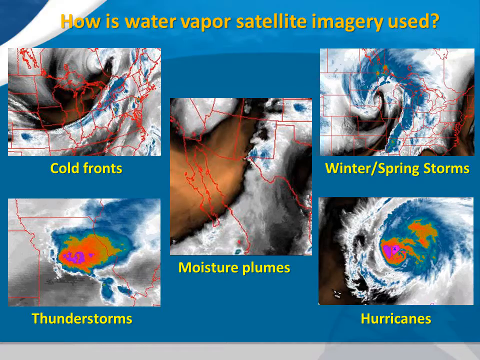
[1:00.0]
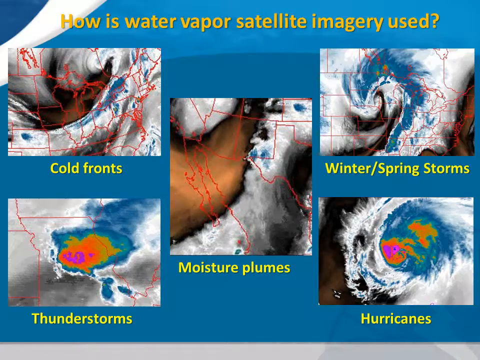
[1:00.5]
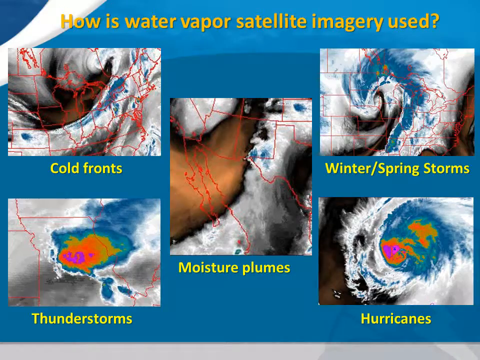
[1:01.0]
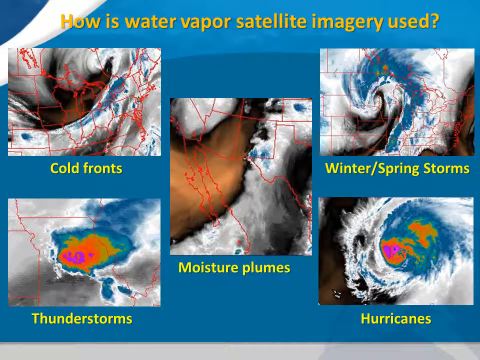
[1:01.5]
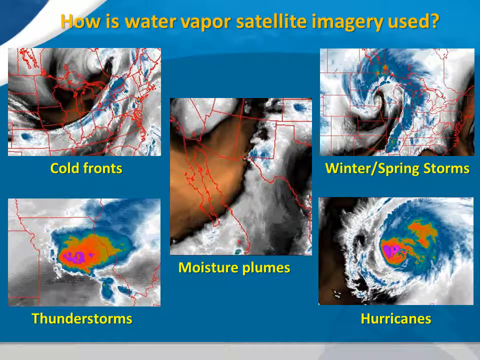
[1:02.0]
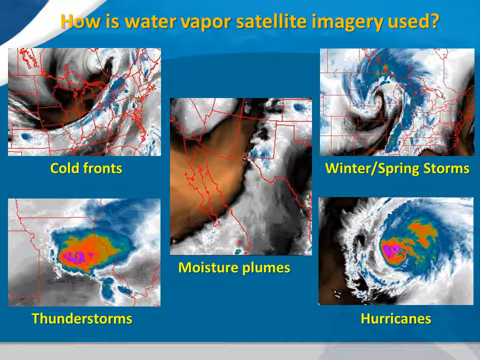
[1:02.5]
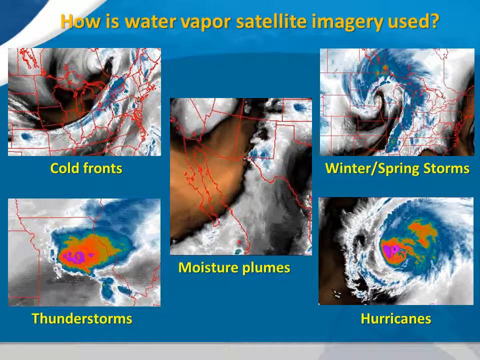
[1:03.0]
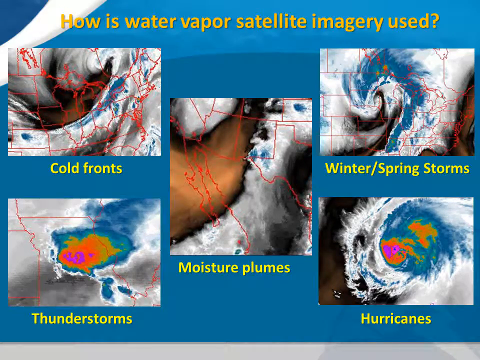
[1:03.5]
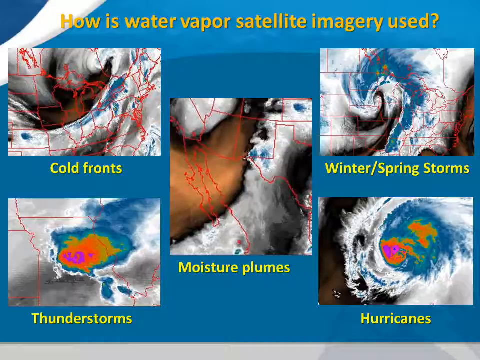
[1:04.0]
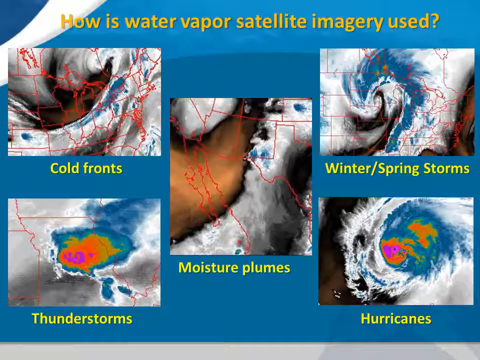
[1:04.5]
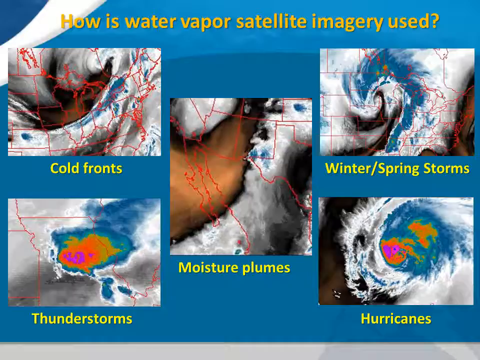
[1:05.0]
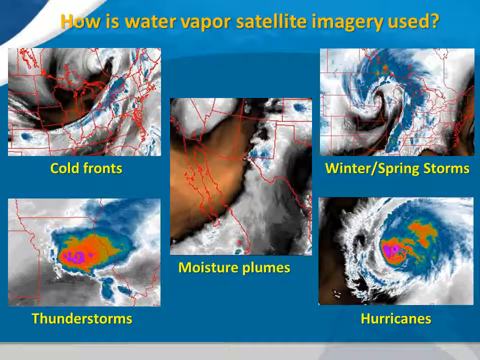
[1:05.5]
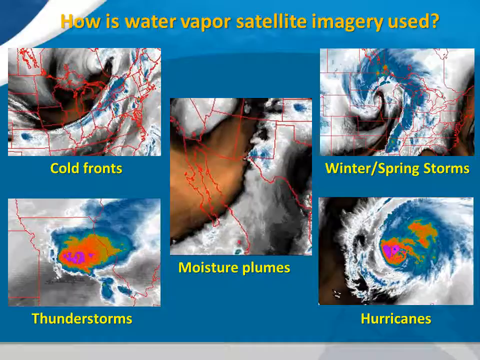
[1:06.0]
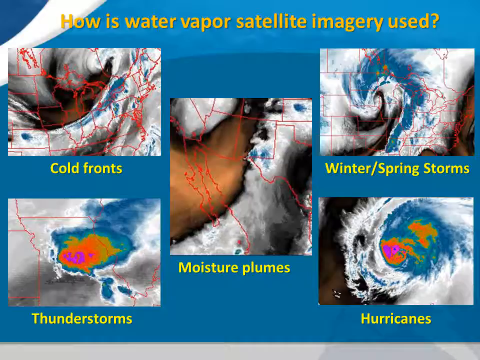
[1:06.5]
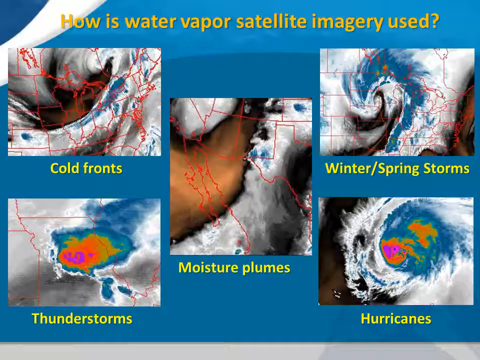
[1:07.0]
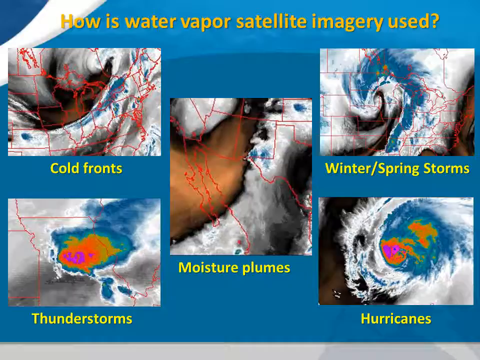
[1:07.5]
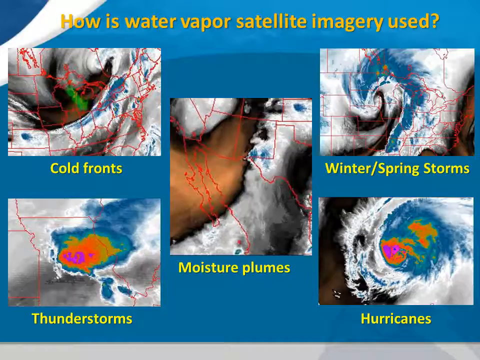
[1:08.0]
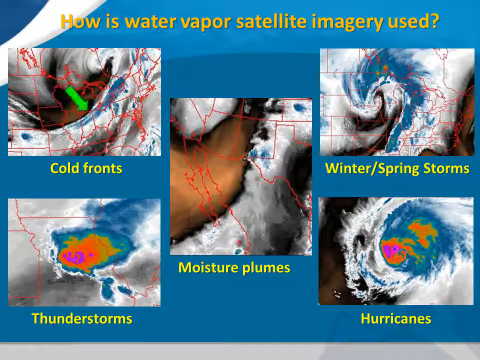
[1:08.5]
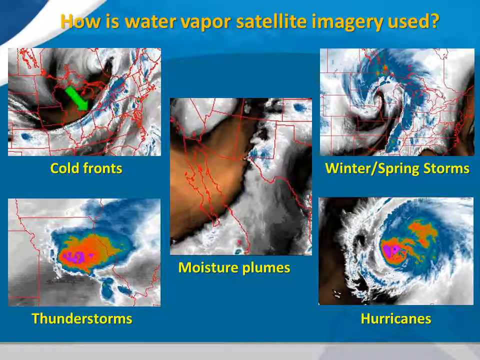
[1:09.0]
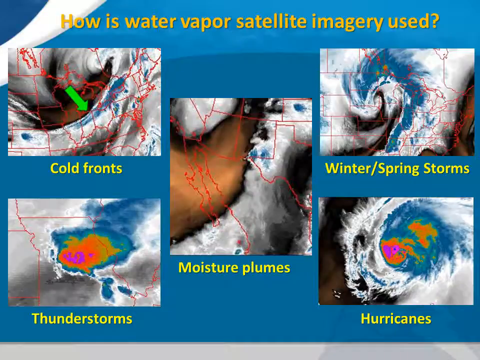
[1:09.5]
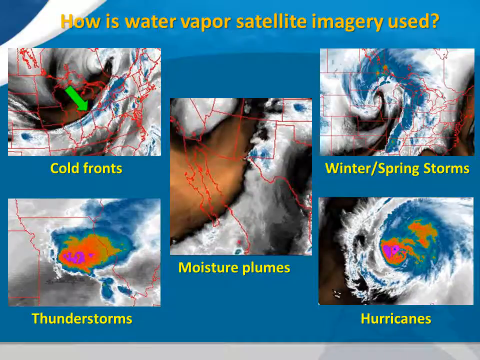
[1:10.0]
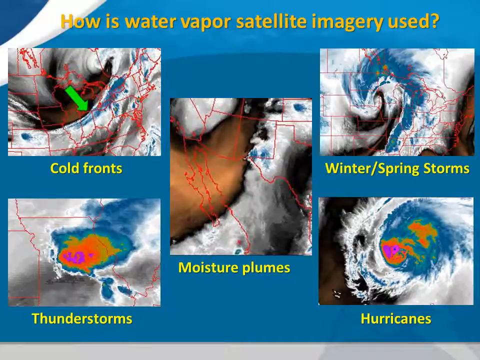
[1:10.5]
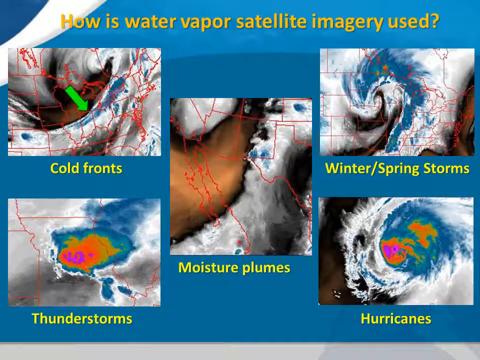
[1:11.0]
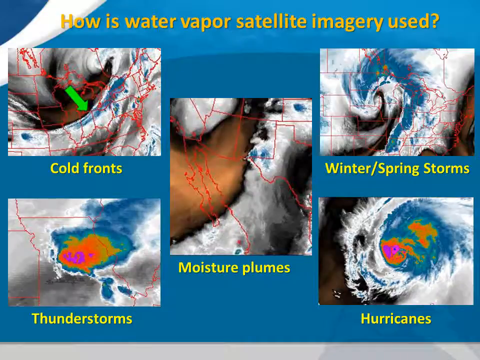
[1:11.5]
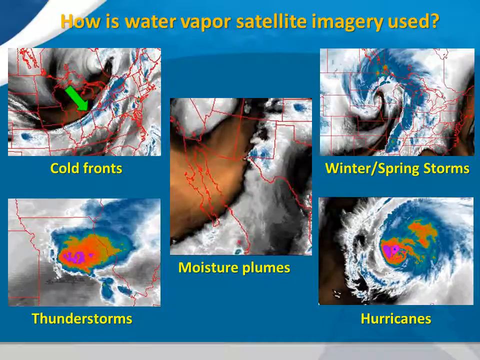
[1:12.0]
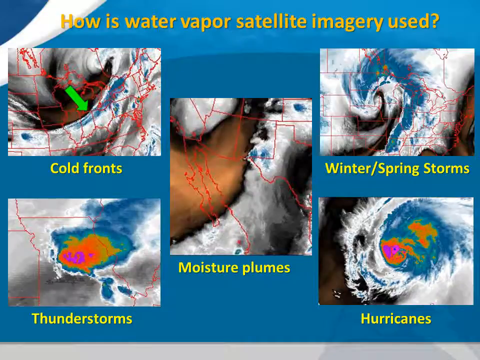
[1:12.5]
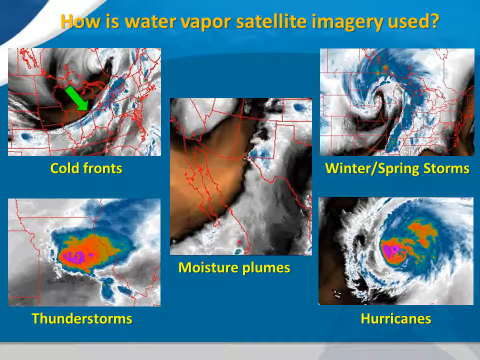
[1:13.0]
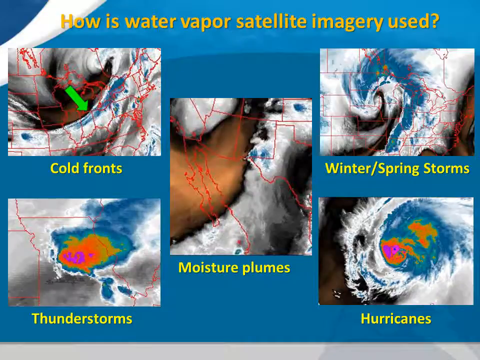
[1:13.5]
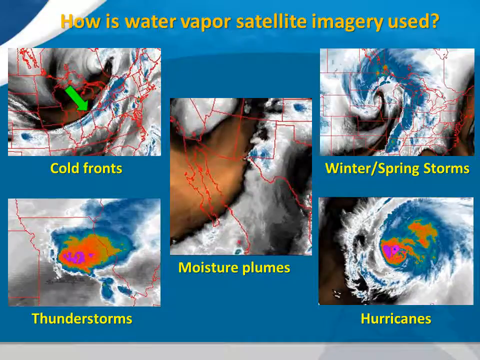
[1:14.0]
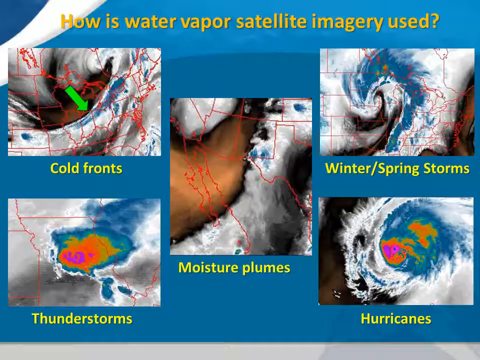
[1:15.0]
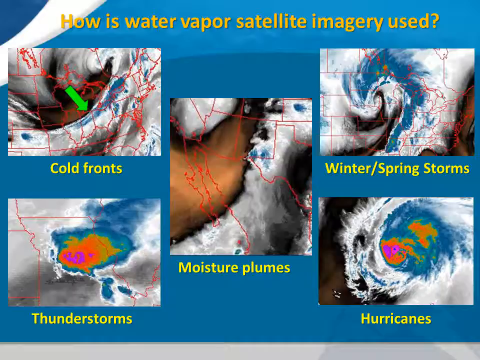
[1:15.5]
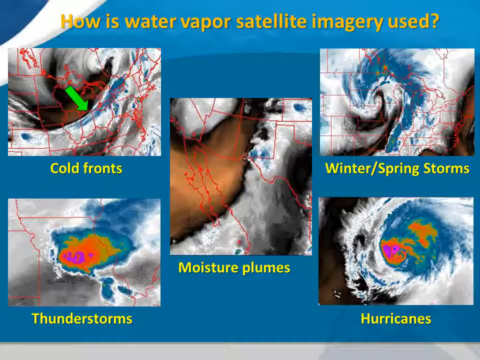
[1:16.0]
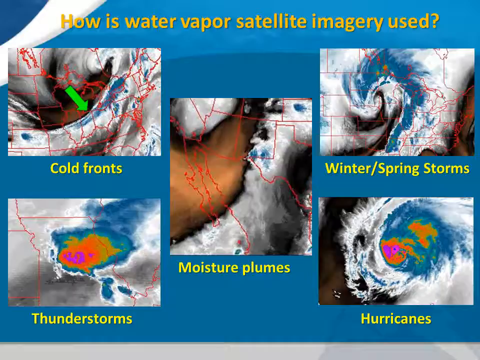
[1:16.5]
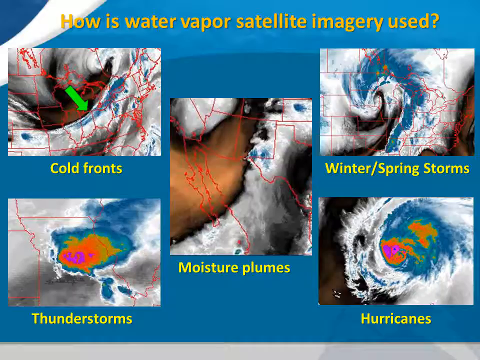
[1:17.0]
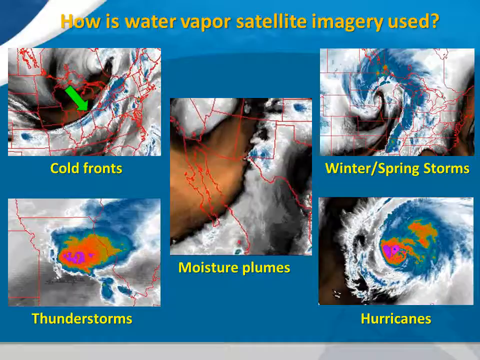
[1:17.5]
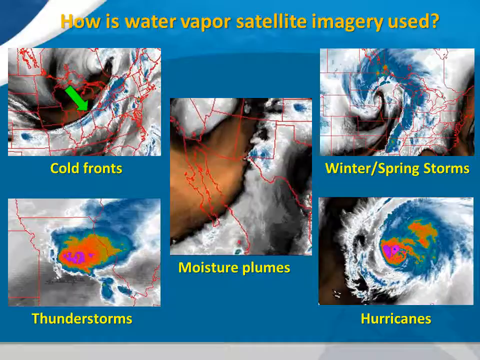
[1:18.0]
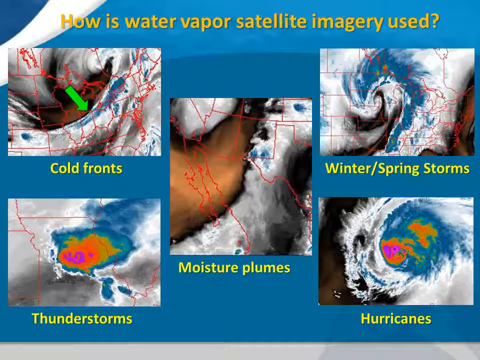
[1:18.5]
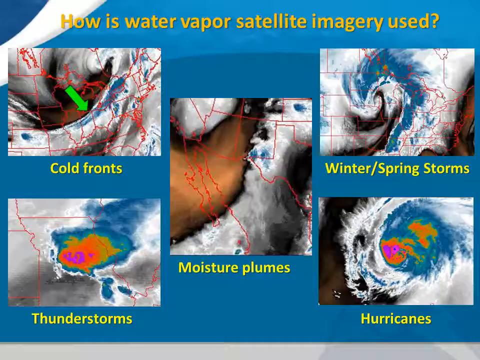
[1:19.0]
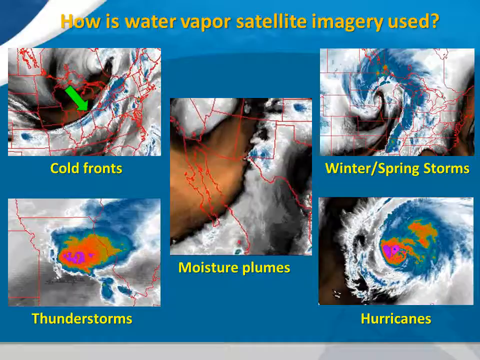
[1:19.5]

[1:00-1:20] The screen shows multiple images of different places in the United States over a map overlay of the states, on a light blue background. All the text on the screen is yellow; at the top it reads "how is water vapor satellite imagery used." There are five images, each with text below it: the top left one says "cold fronts," the bottom left "thunderstorms," the middle "moisture plumes," the top right "winter, spring storms," and the bottom right "hurricanes." White cloud-type illustrations or animations appear over the map overlays, with purple, orange, red, yellow, green, light blue, and dark blue within them. The outlines of the states are red. On the cold fronts map, a green arrow points southeast.